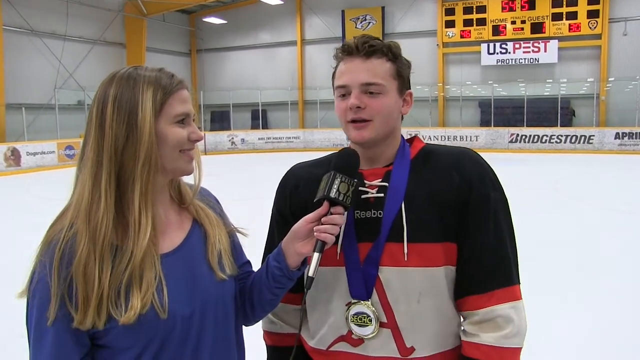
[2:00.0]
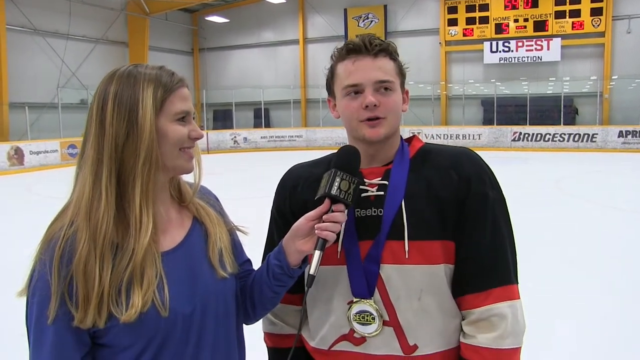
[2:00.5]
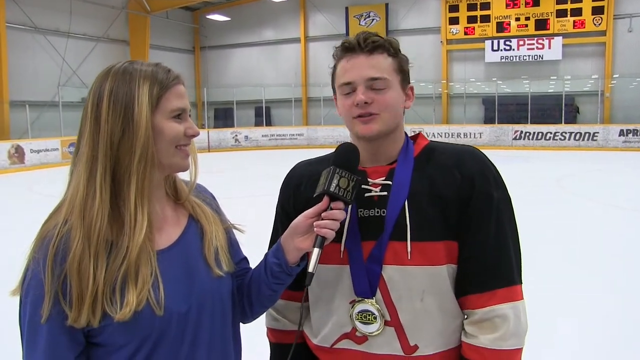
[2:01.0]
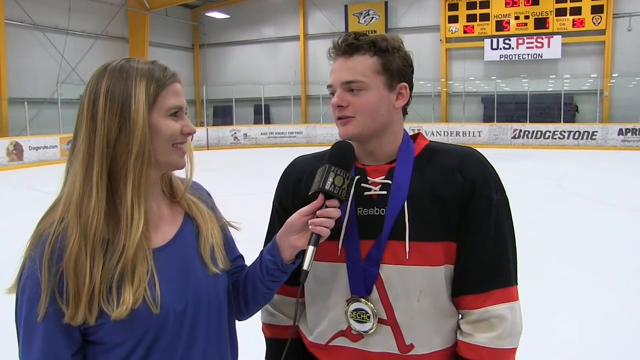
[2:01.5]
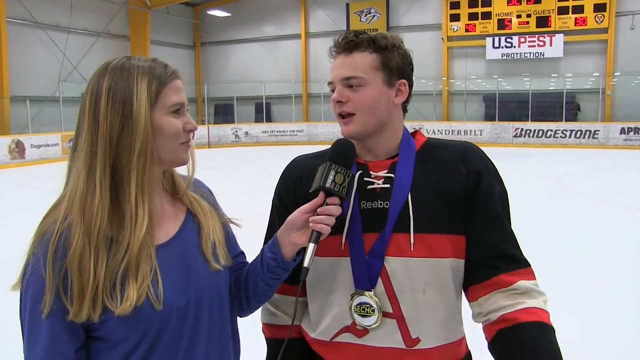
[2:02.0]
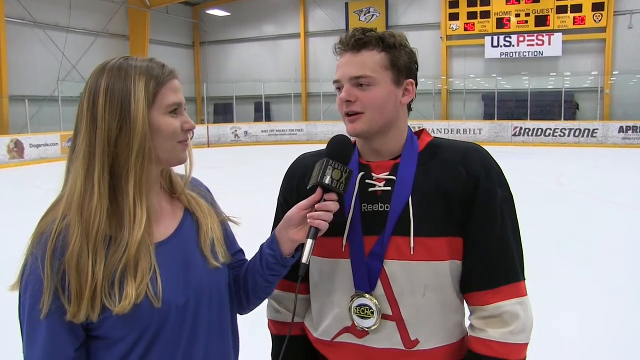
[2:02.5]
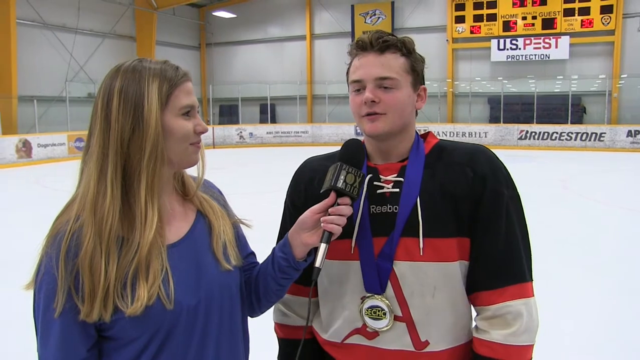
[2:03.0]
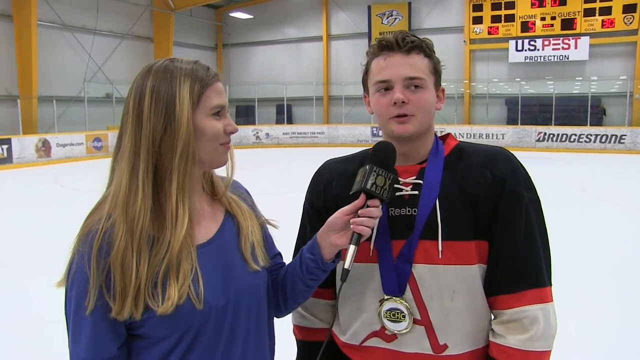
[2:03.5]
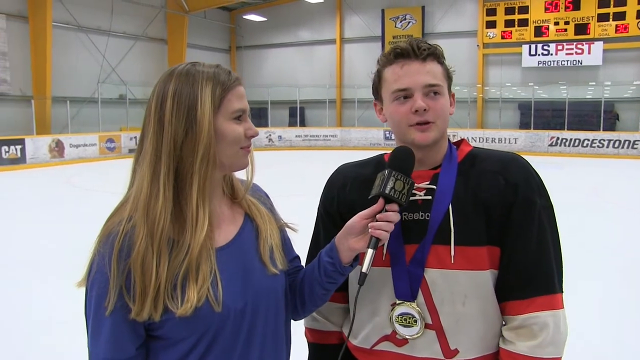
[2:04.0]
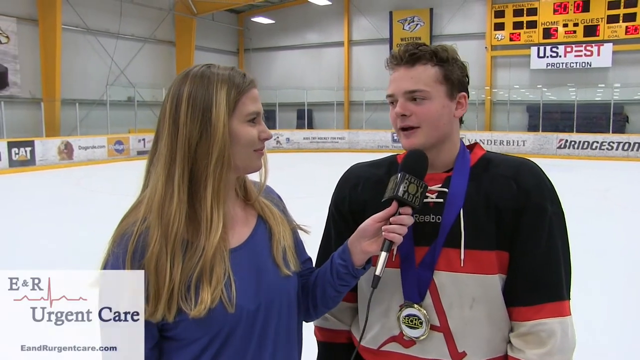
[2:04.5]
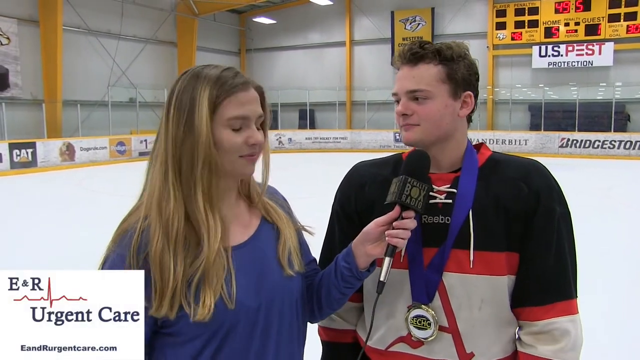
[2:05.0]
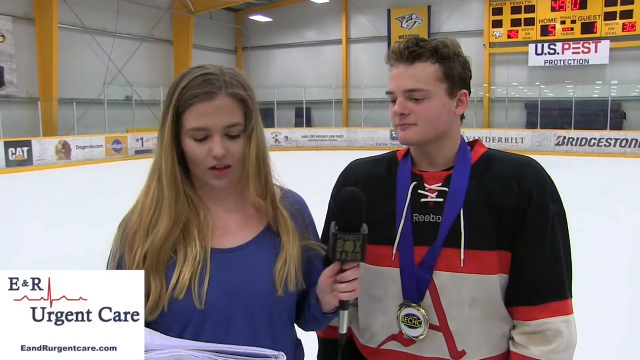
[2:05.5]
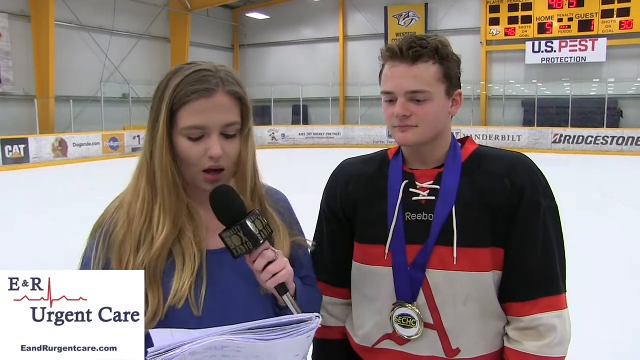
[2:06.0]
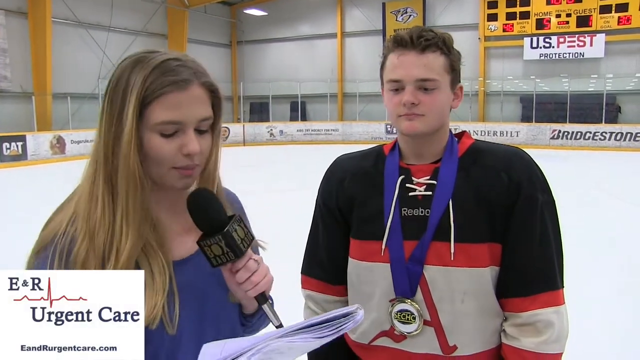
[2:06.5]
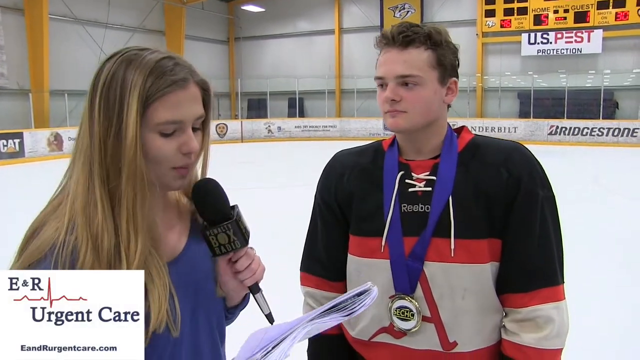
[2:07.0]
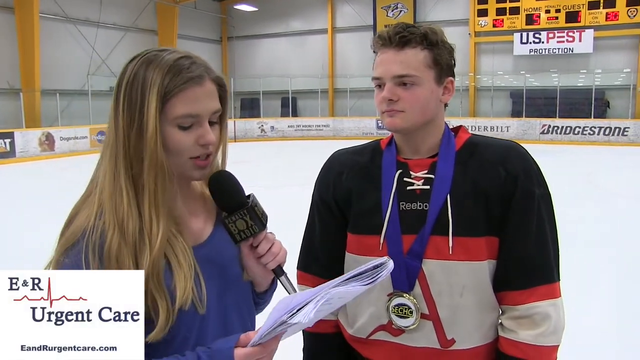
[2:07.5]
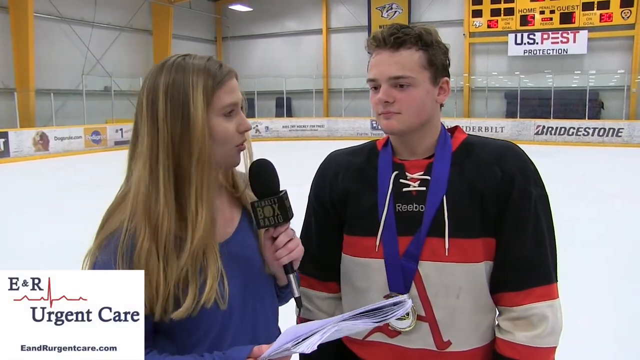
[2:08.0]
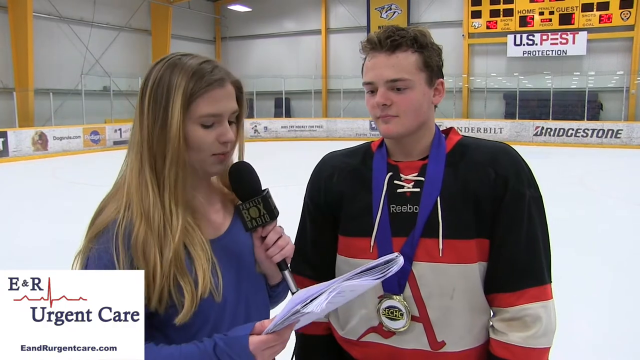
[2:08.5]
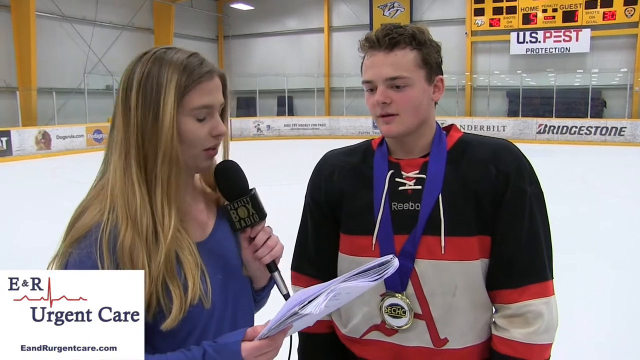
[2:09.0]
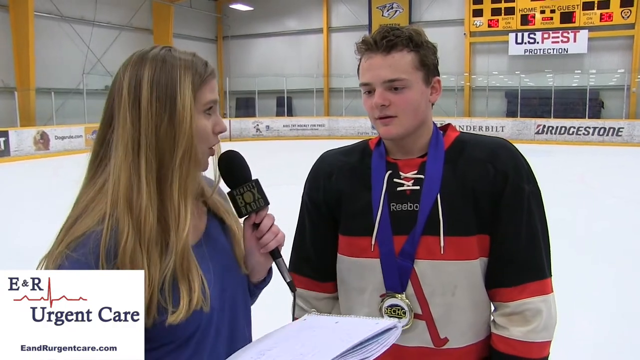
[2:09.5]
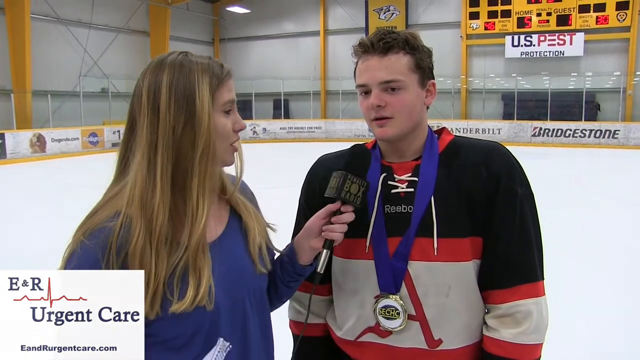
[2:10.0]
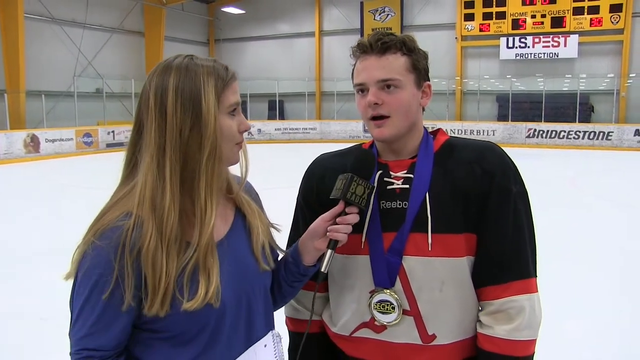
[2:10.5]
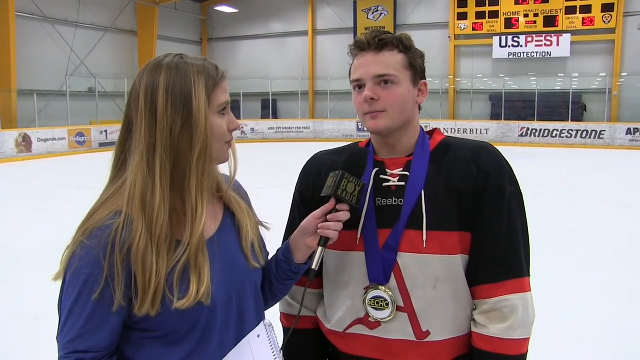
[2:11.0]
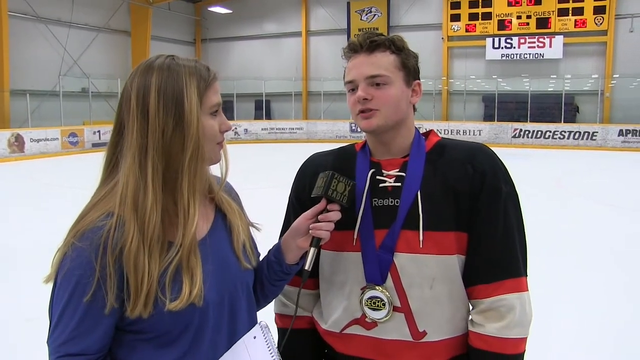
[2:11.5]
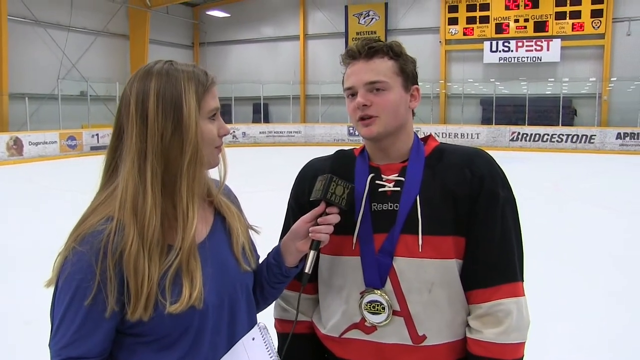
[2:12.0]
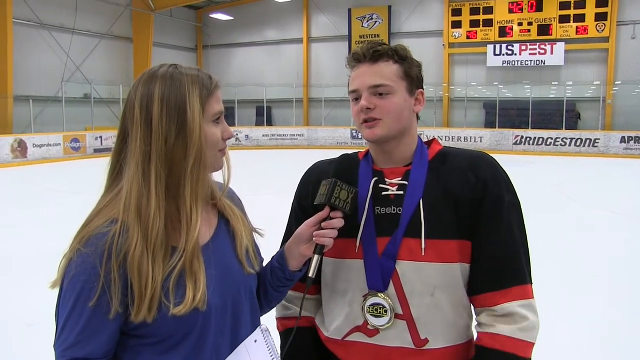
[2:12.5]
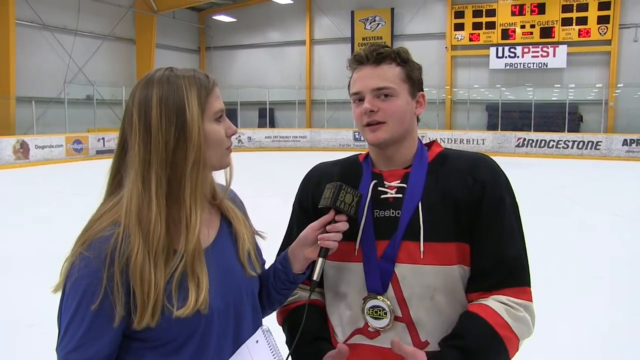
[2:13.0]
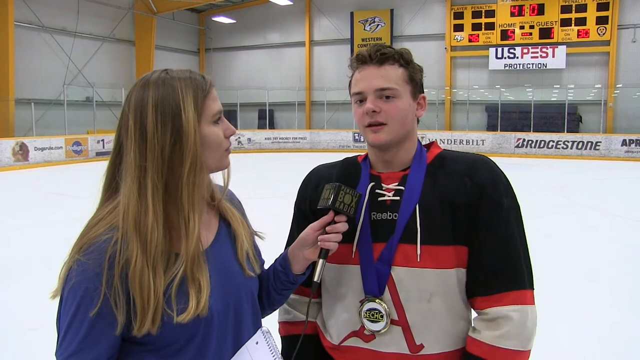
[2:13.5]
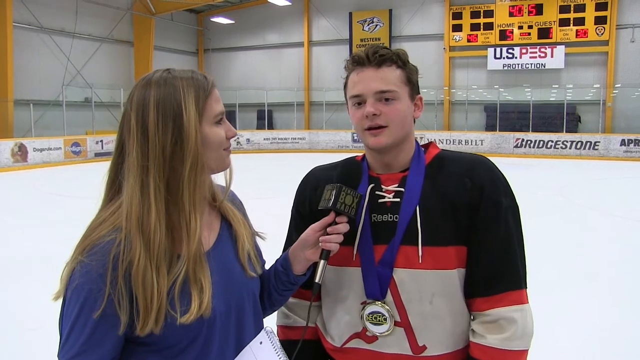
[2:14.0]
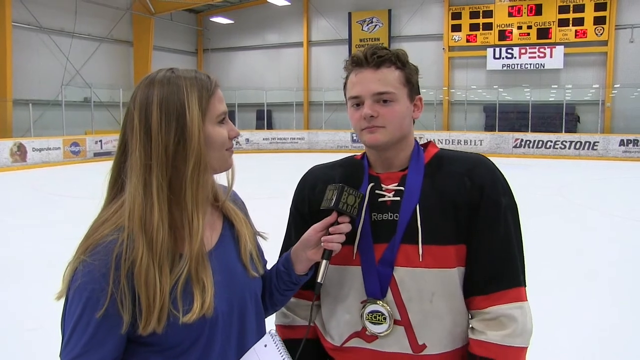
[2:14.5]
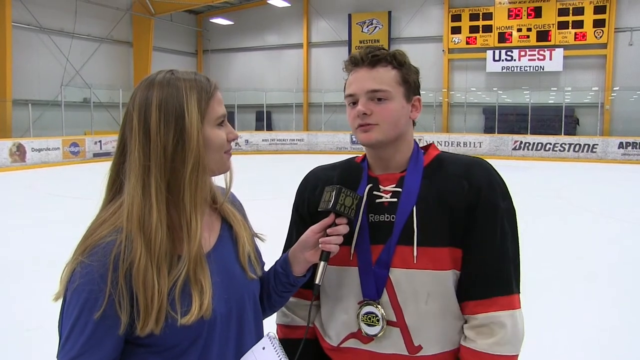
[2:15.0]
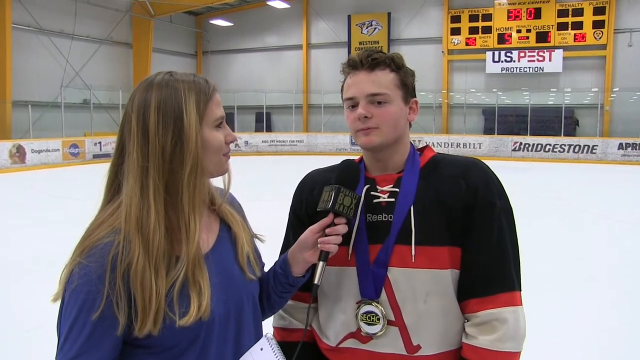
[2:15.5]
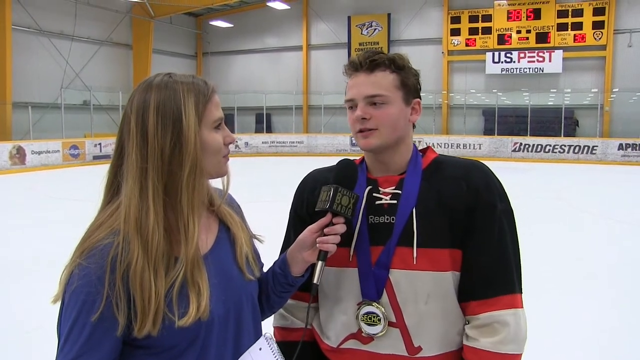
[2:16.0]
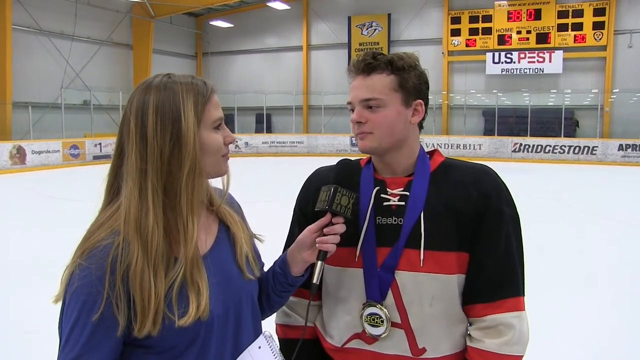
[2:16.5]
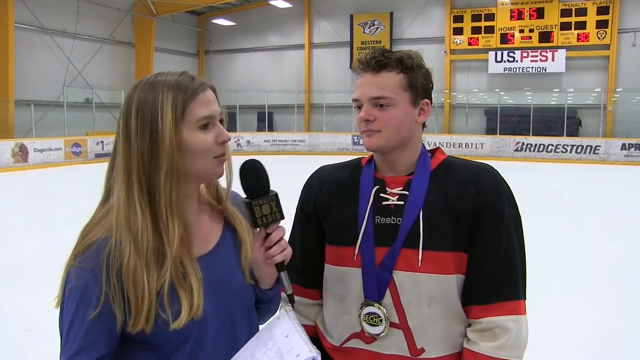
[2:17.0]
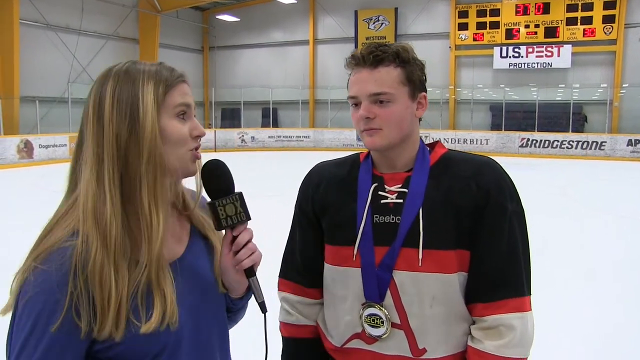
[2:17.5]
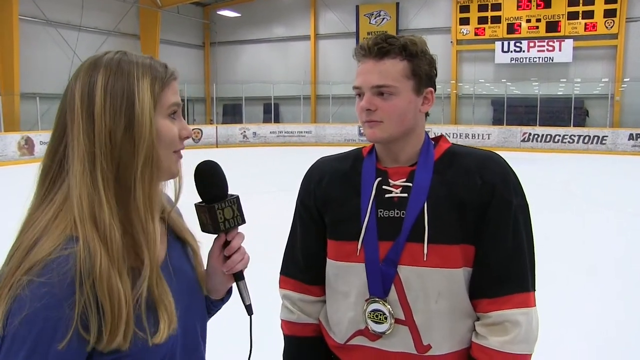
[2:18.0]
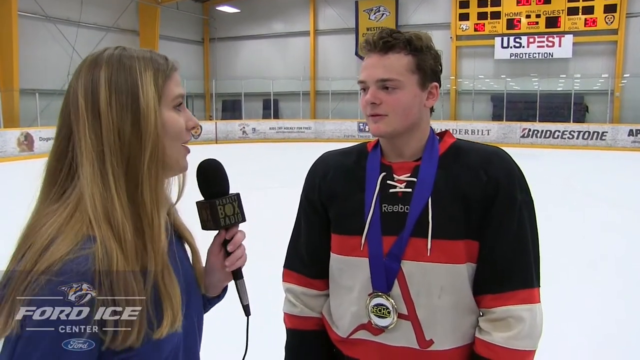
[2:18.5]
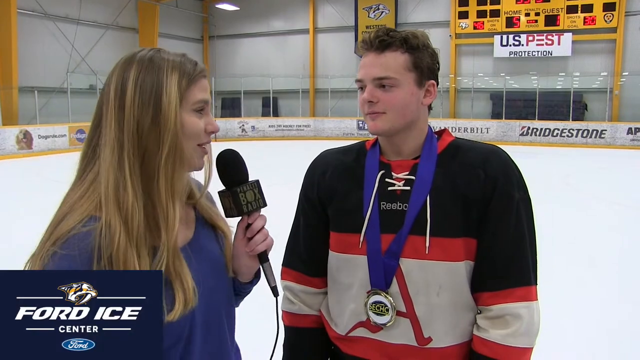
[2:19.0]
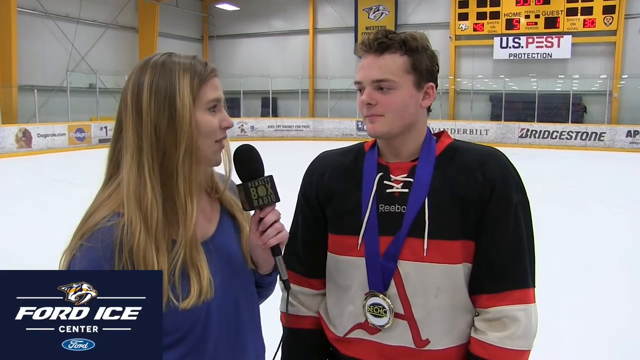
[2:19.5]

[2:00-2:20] An interviewer wearing a purple t-shirt interviews hockey players, putting a microphone in front of their faces. The players are on the ice. The area has gray walls and yellow pillars.